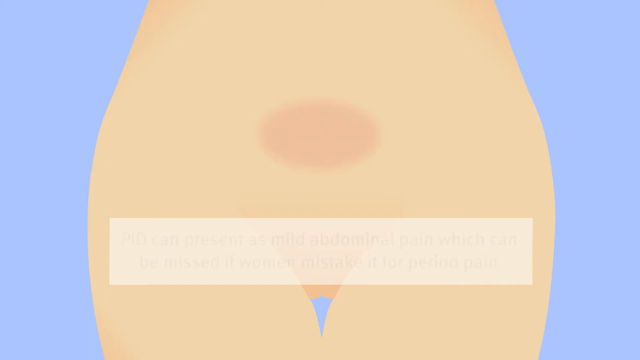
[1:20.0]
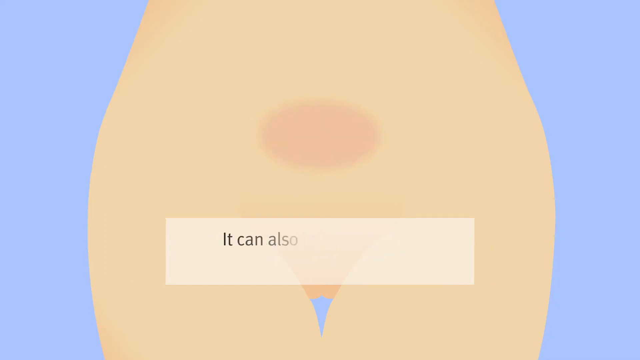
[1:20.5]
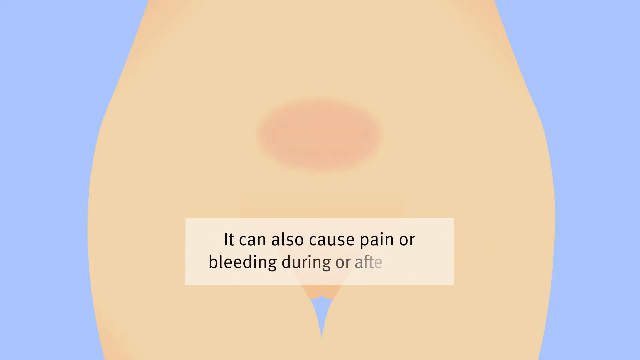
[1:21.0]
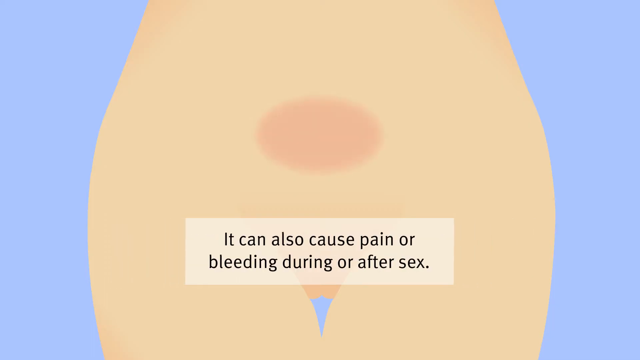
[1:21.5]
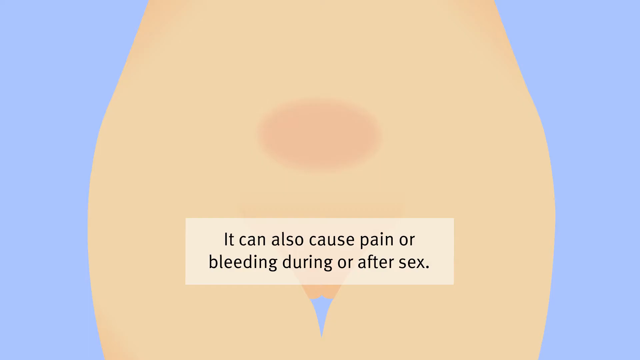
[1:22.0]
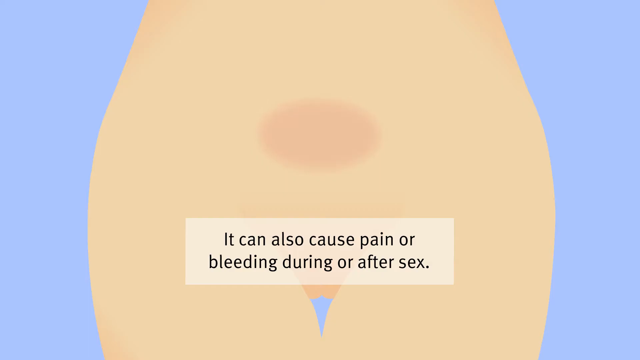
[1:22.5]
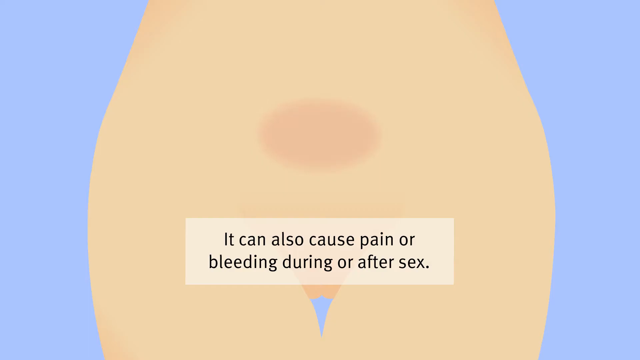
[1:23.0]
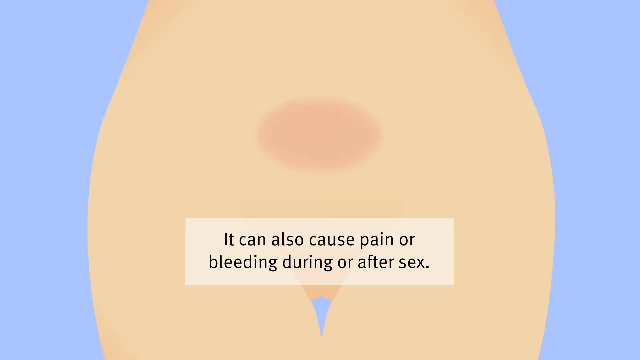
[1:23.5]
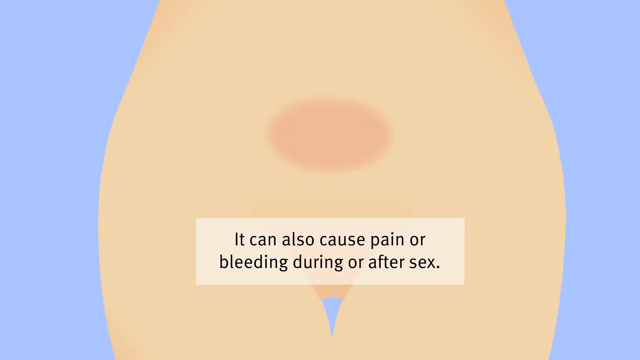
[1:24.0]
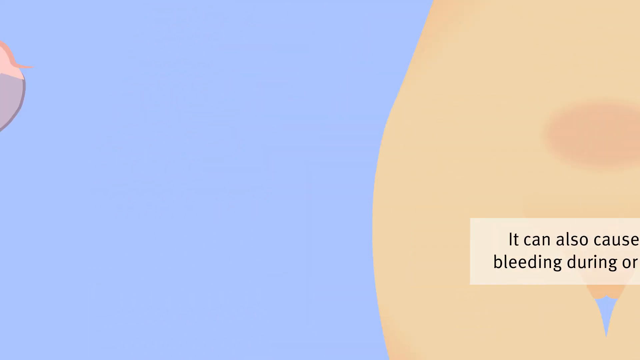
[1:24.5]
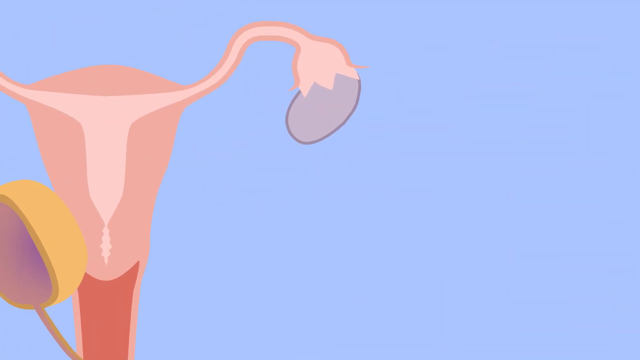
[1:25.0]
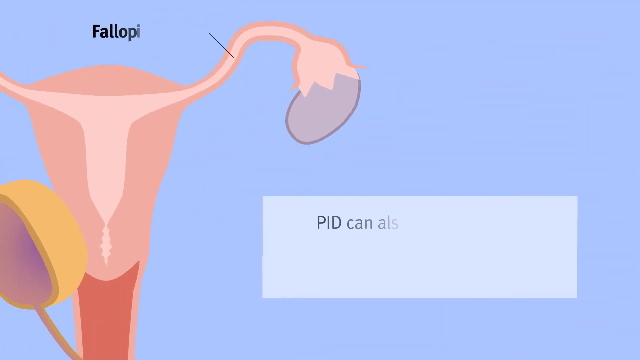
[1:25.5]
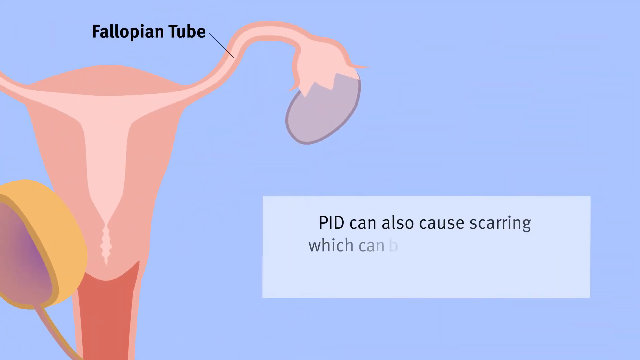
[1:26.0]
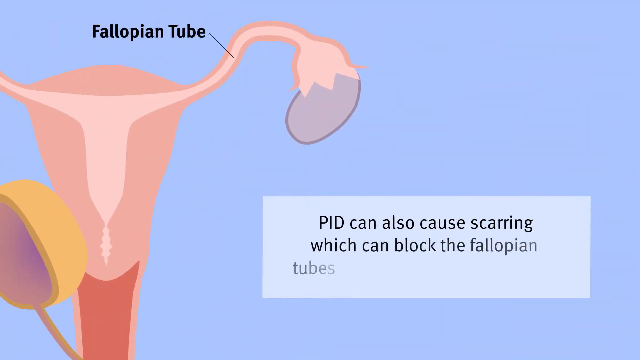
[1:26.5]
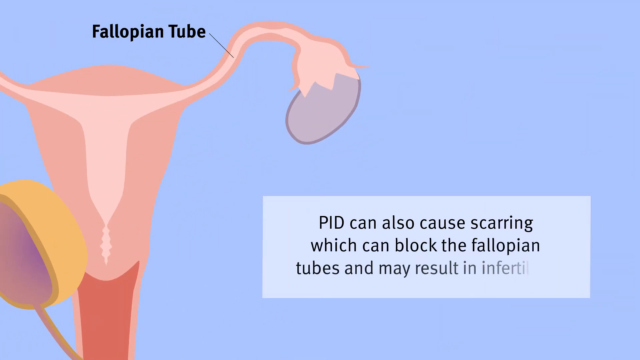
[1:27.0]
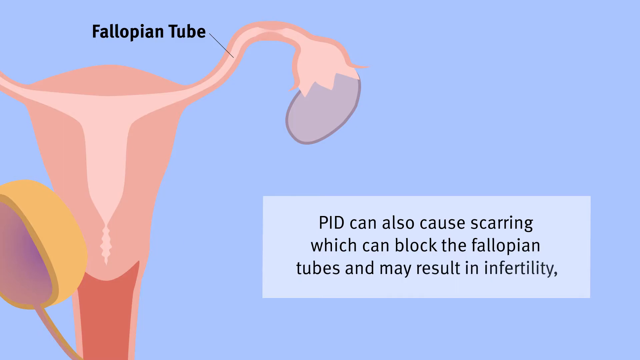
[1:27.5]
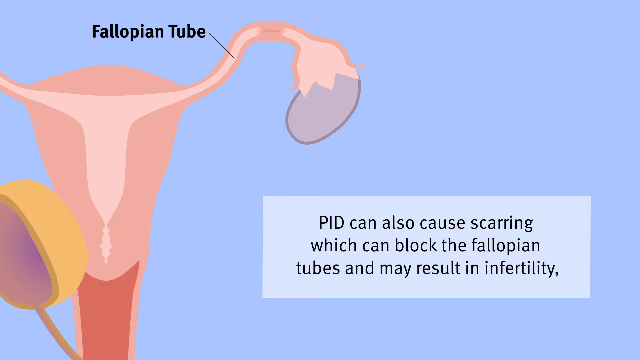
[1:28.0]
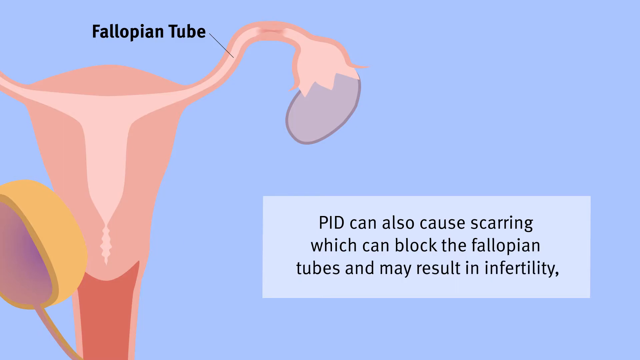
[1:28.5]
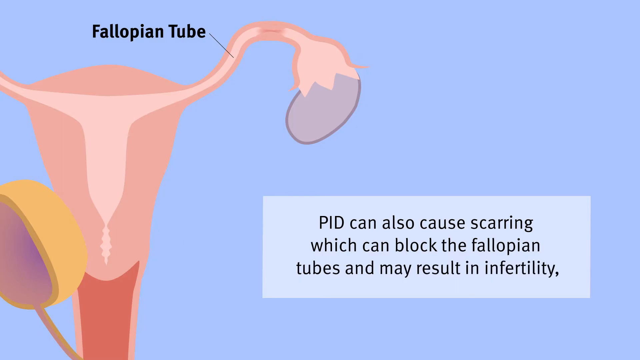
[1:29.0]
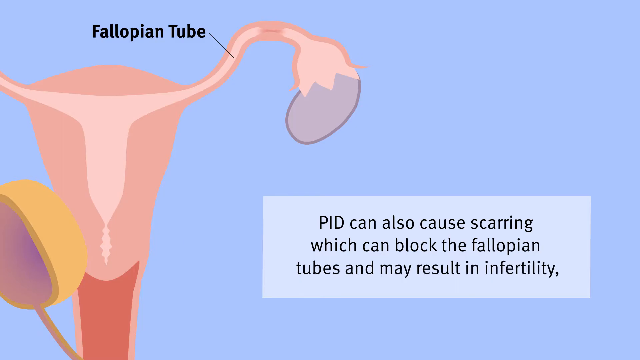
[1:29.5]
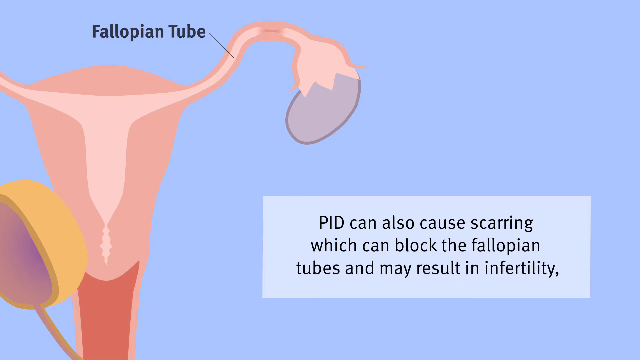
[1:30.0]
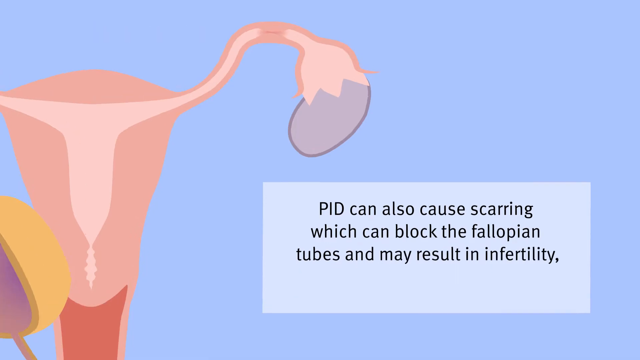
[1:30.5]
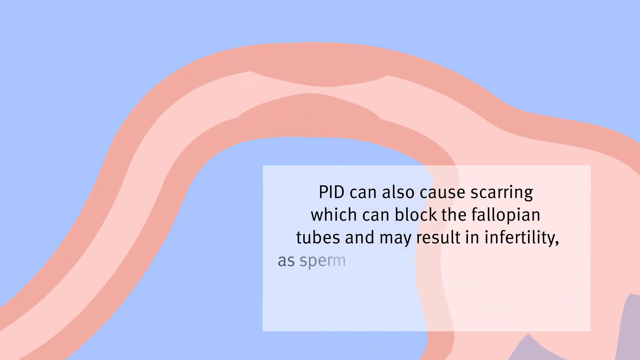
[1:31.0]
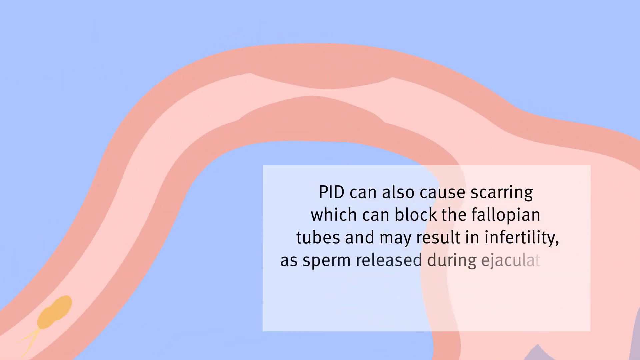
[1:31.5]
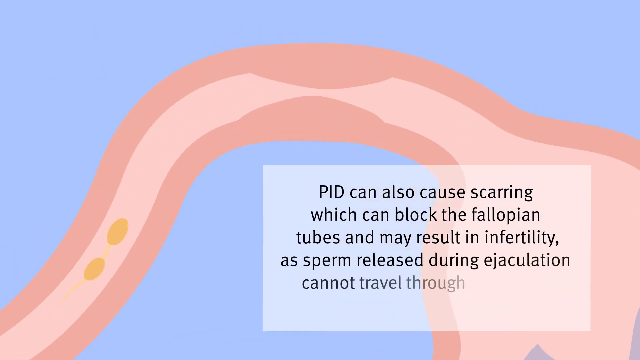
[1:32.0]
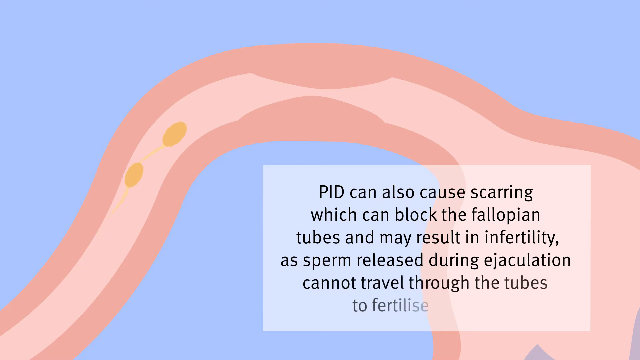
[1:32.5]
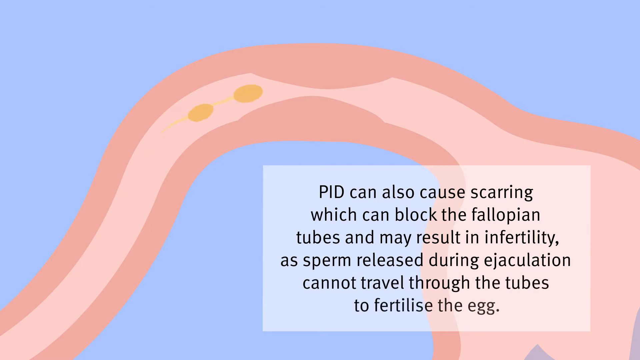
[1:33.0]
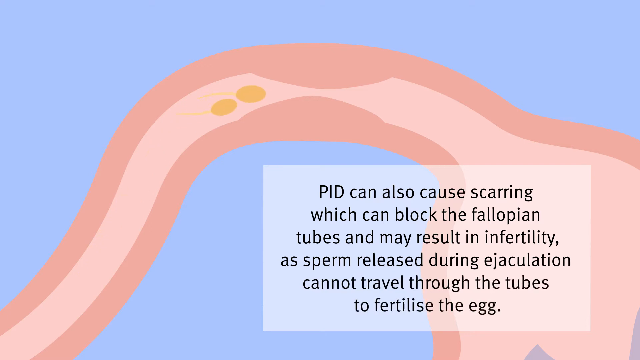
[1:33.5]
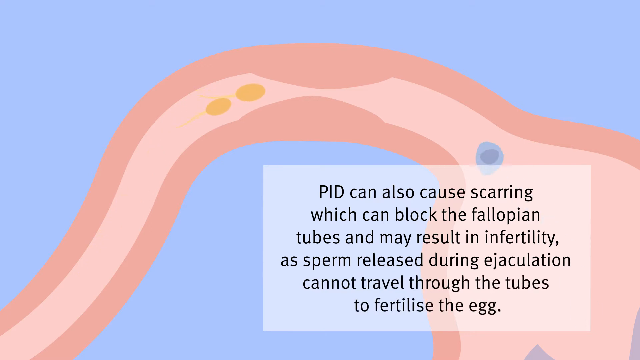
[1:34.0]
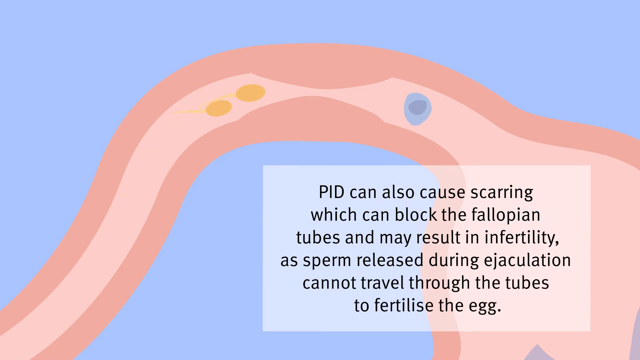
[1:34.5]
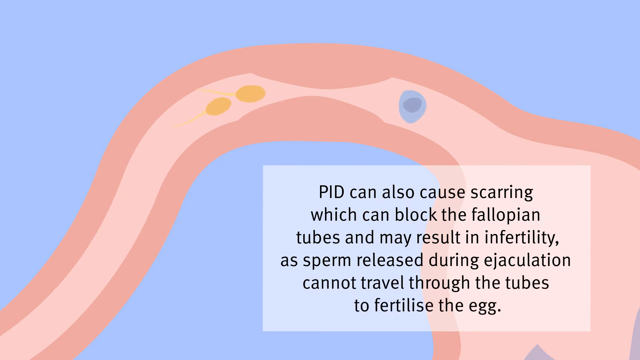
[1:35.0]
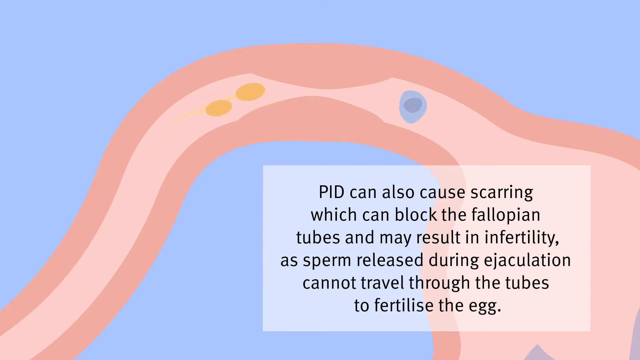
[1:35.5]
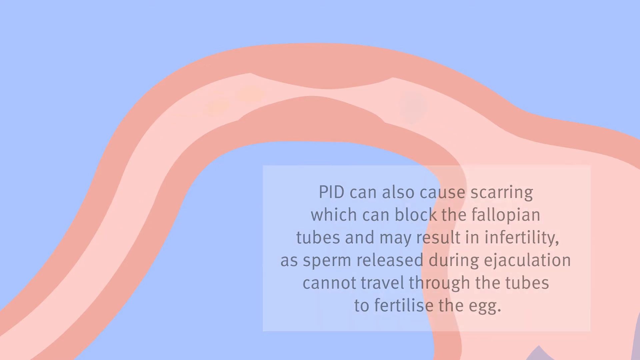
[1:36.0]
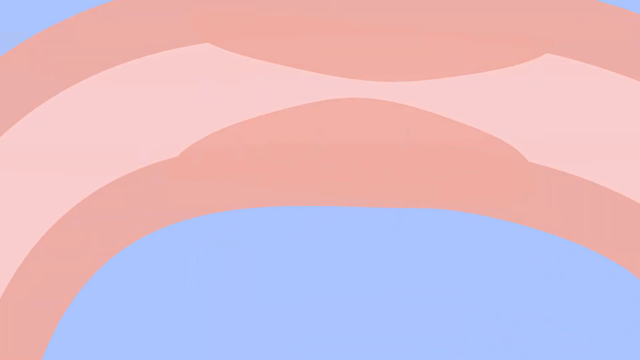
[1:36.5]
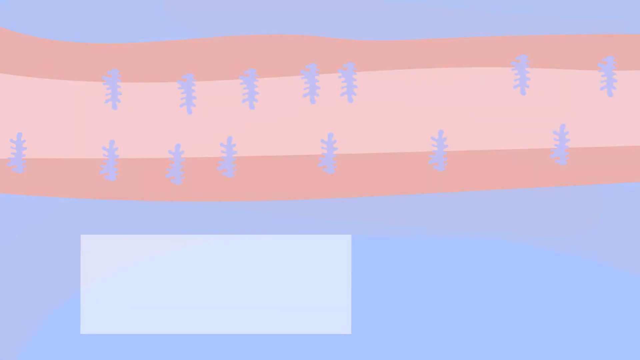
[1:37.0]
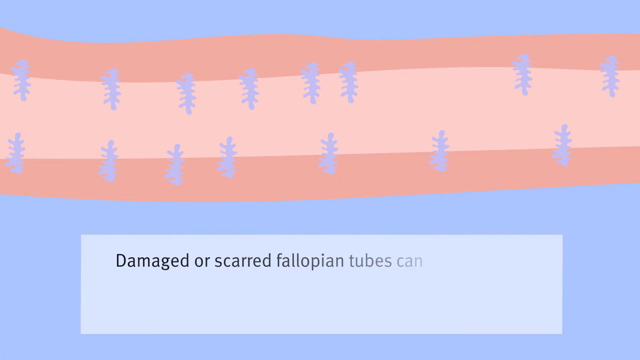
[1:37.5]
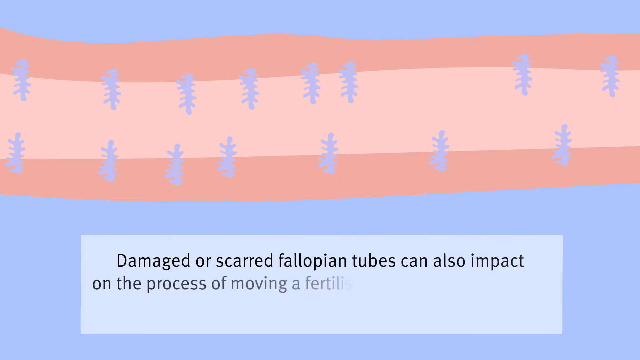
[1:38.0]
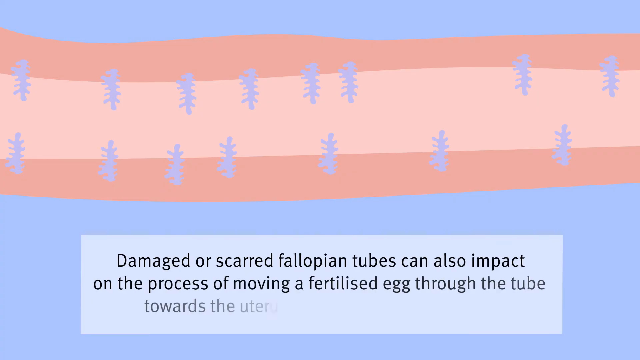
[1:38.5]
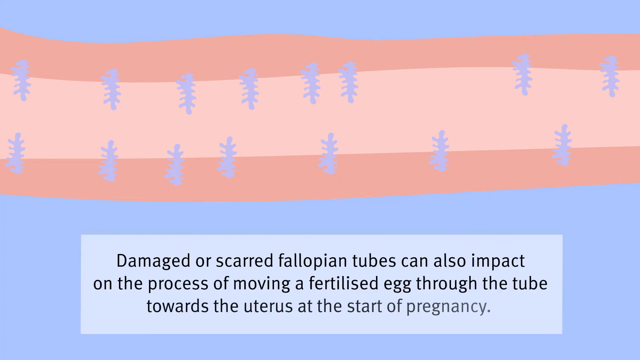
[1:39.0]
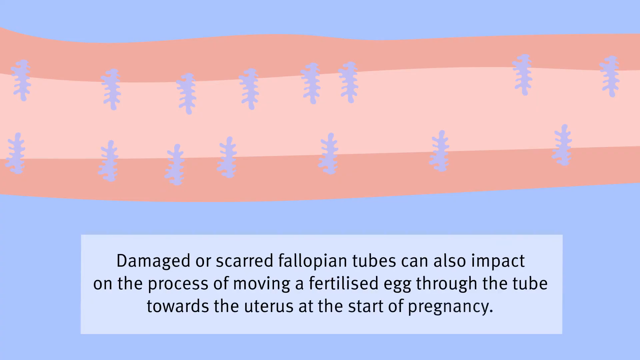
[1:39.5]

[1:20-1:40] A cartoon female body from the waist down is shown on a blue background, with a faint oval marking where the pelvic inflammatory disease would be. A box reads "it can also cause pain or bleeding during or after sex." That moves off to the right, the picture of the female reproductive tract comes back, and text reads "PID also causes scarring which can block the fallopian tubes and may result in infertility."